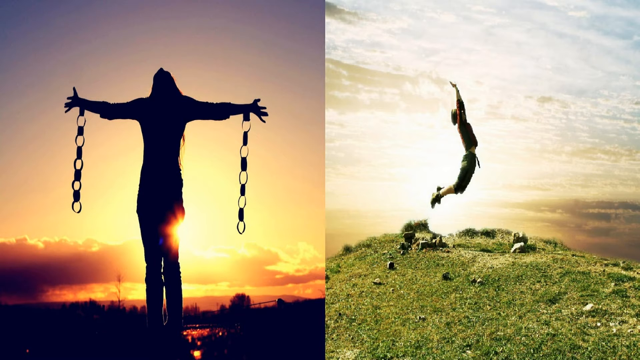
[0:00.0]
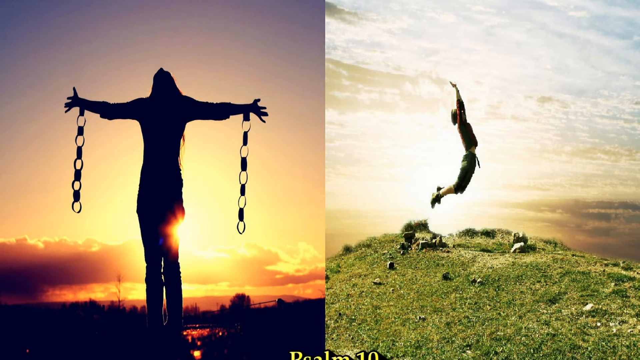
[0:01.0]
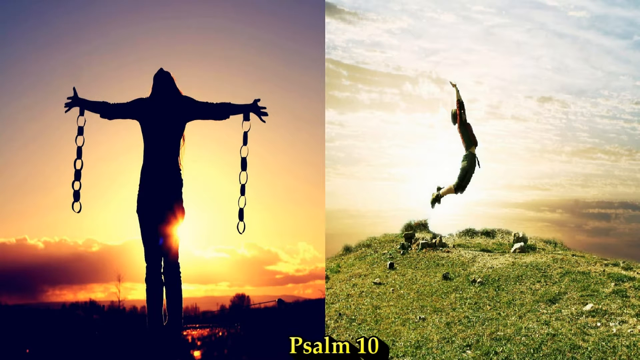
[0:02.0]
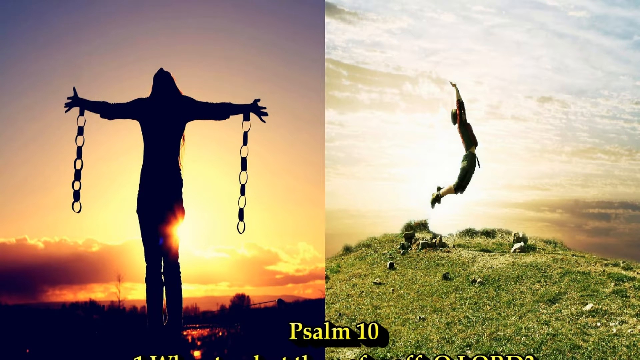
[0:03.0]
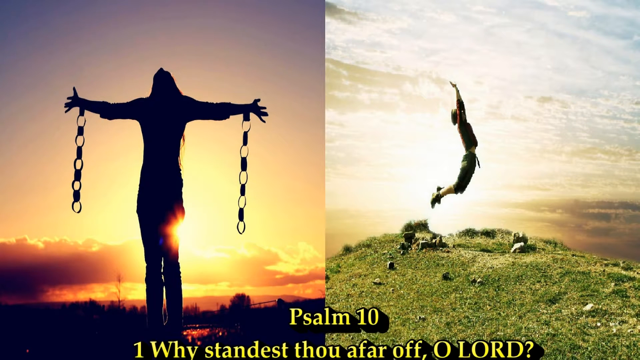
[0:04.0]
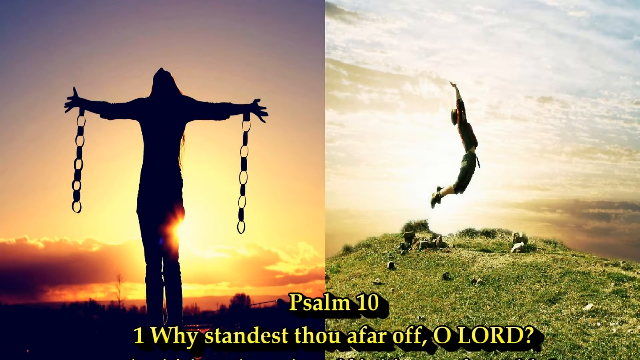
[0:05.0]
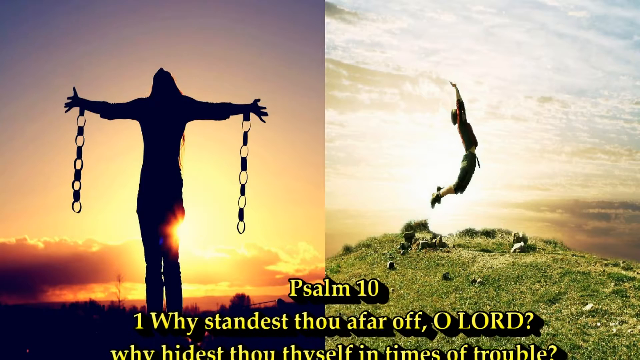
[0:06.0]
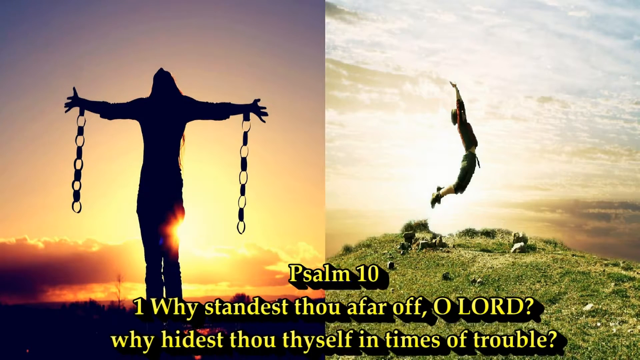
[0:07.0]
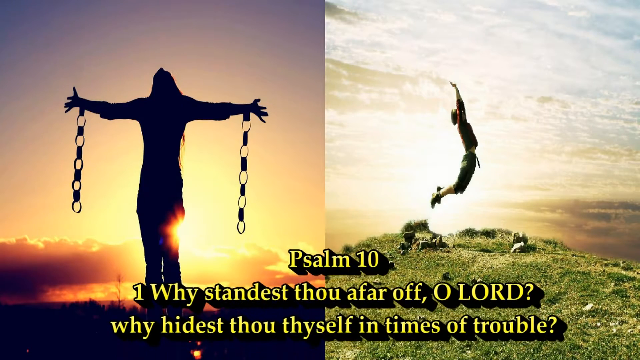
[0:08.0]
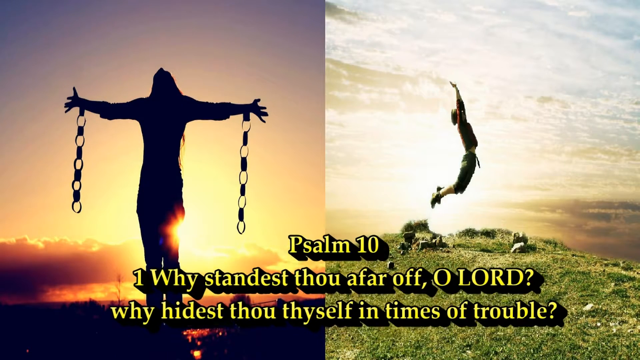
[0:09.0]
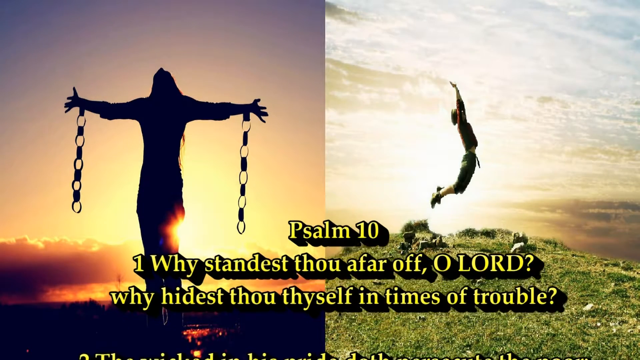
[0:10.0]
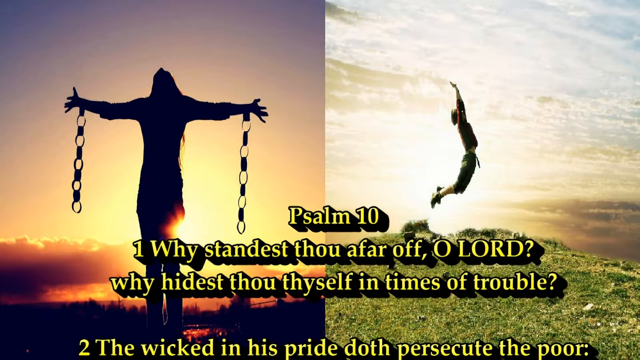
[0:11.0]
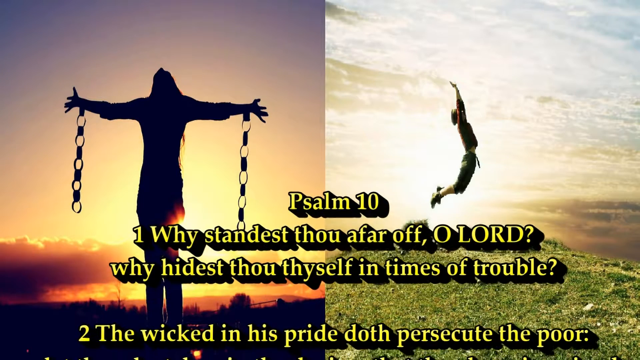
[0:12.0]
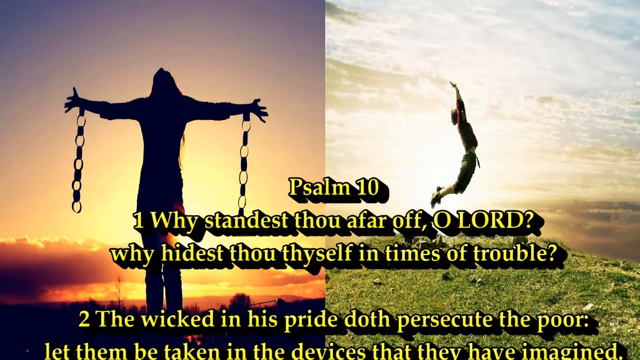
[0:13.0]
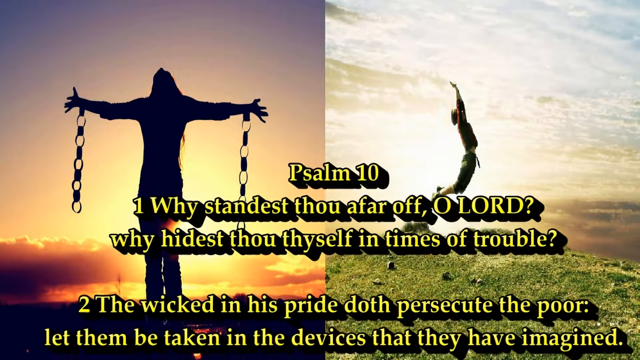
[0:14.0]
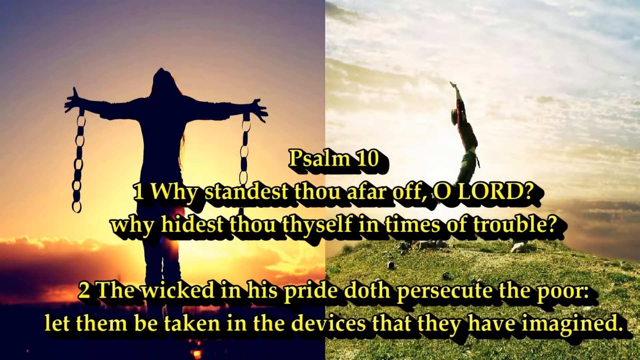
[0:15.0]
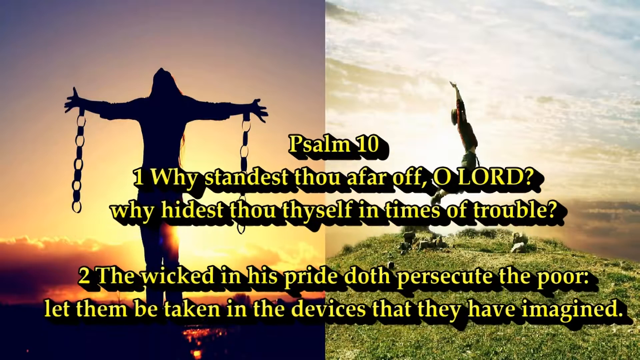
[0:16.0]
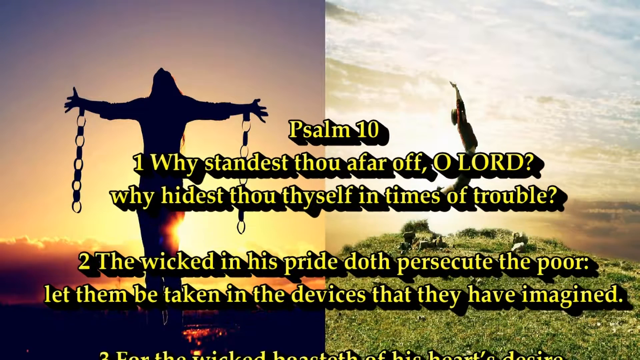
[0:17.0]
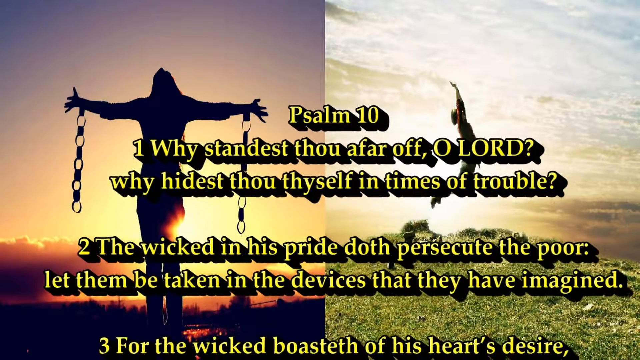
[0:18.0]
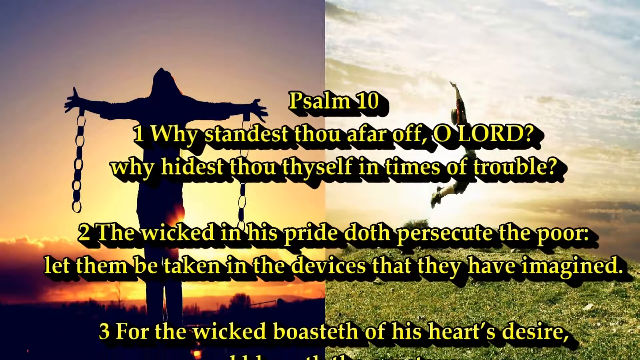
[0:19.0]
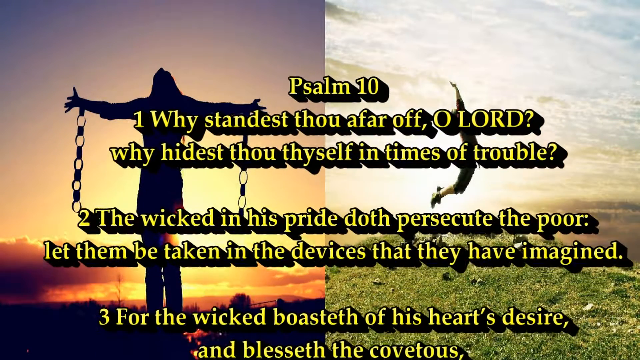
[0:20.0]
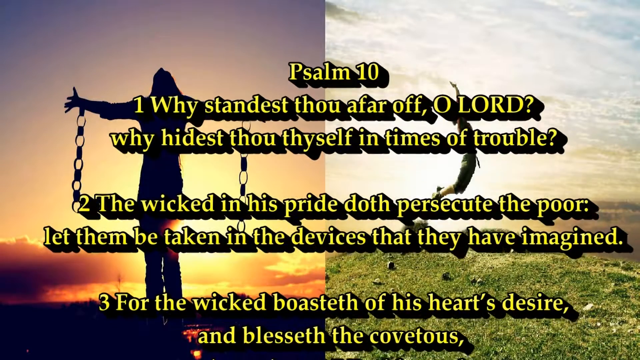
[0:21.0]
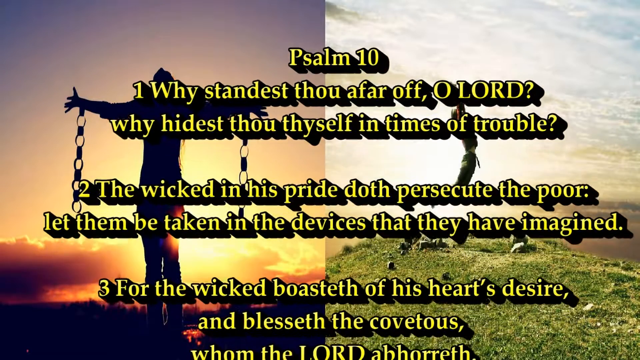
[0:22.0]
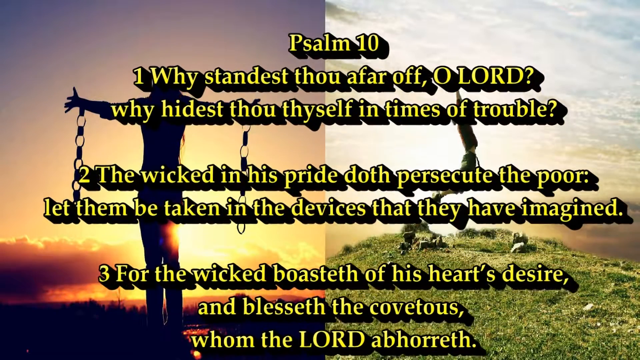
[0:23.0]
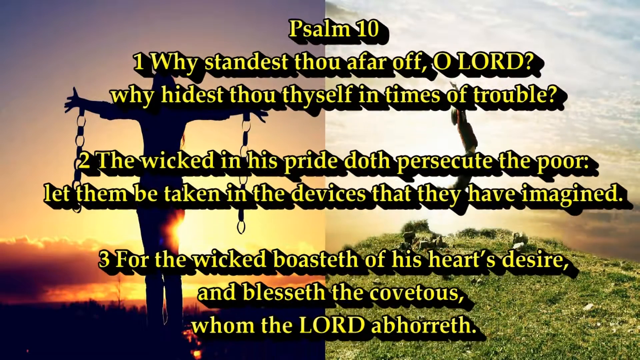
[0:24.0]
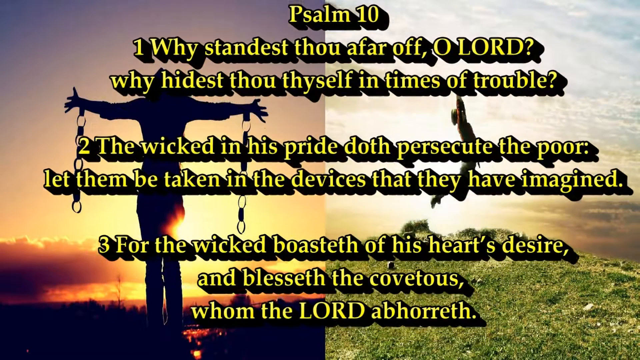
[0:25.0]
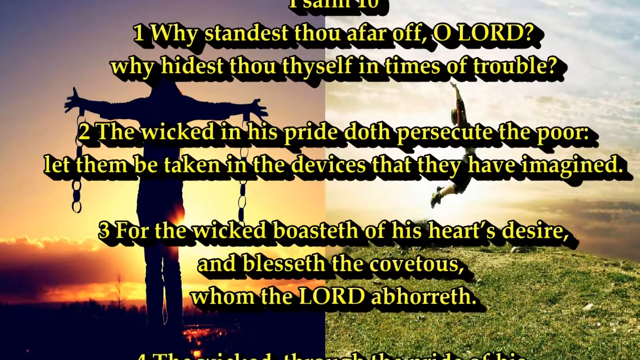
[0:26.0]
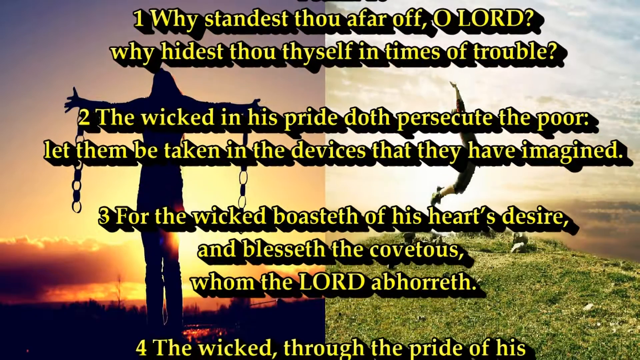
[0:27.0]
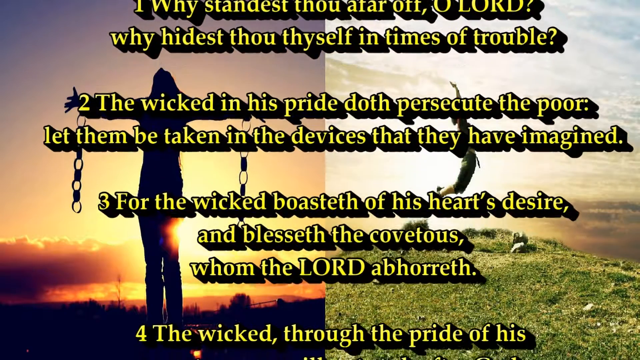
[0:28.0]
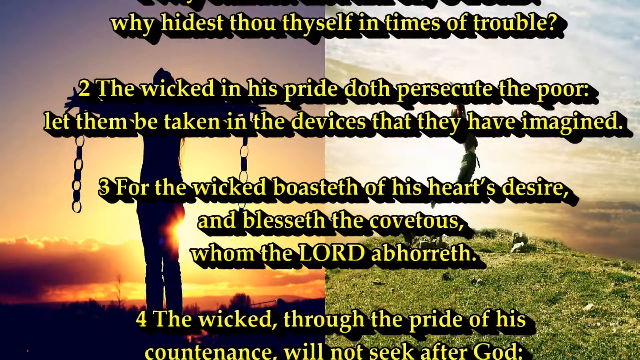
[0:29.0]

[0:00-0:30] Two pictures are visible at the same time. The one on the left seems to show a tall man with long hair, his arms opened straight and his hands open. No skin colour is visible, and it is unclear whether it is a real person or a statue. Chains hang from each of the hands, and the scene seems to be at sunset, with the sun setting. The other picture shows a person jumping with their hands up, and it seems to be during the day. A Bible verse then appears: Psalm 10. Verse 1 is shown with two lines and verse 2 also with two lines, written in yellow. Verse 3 follows with three lines, and then verse 4 appears as well.